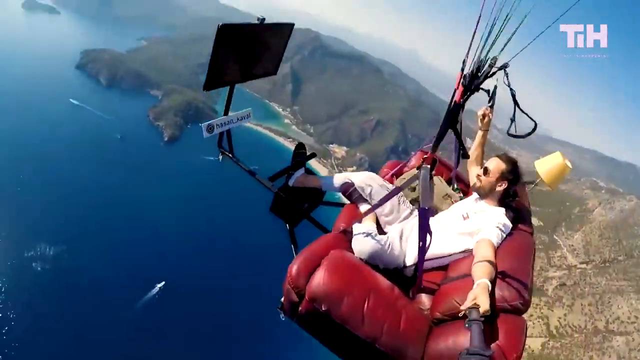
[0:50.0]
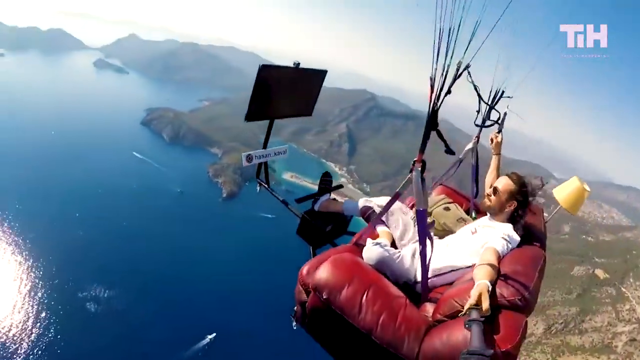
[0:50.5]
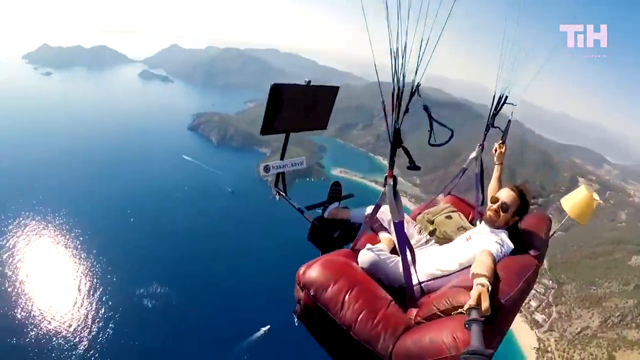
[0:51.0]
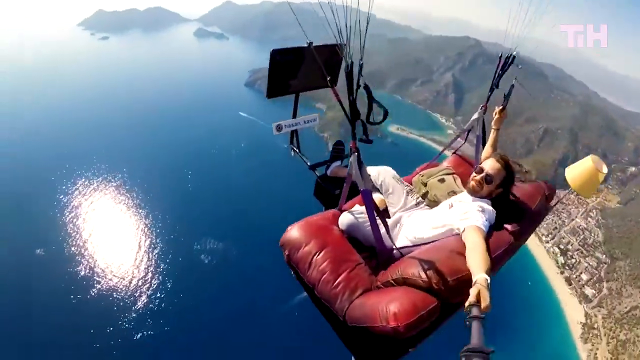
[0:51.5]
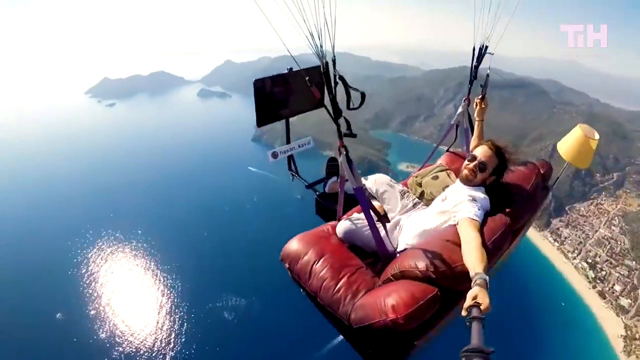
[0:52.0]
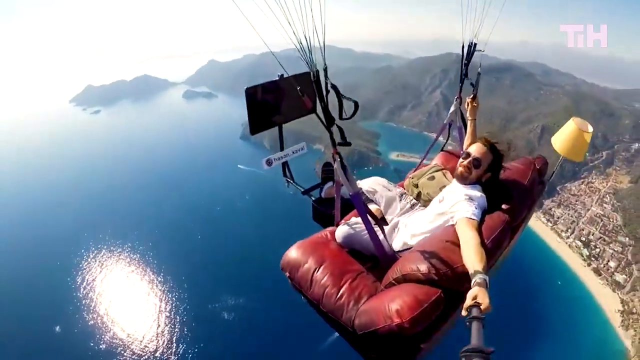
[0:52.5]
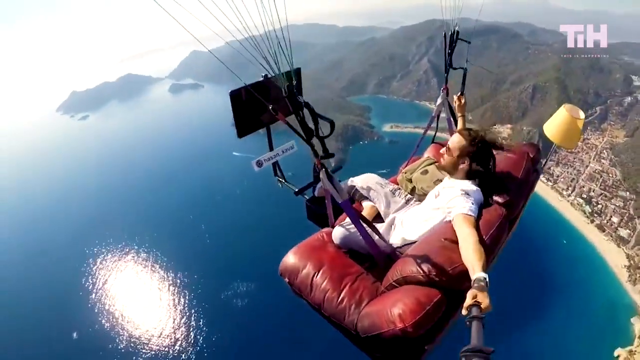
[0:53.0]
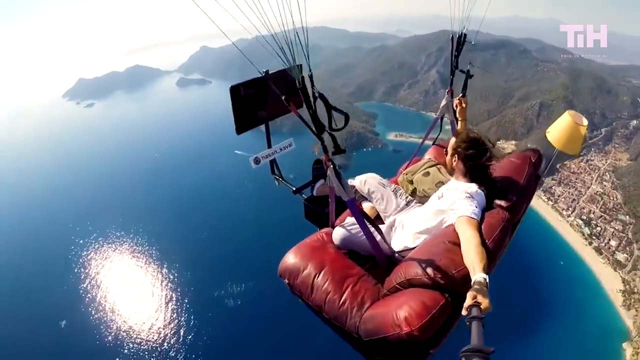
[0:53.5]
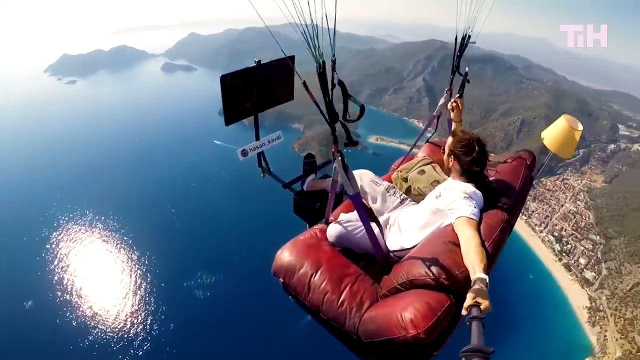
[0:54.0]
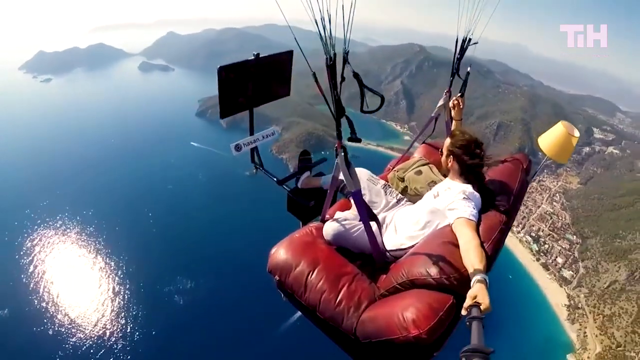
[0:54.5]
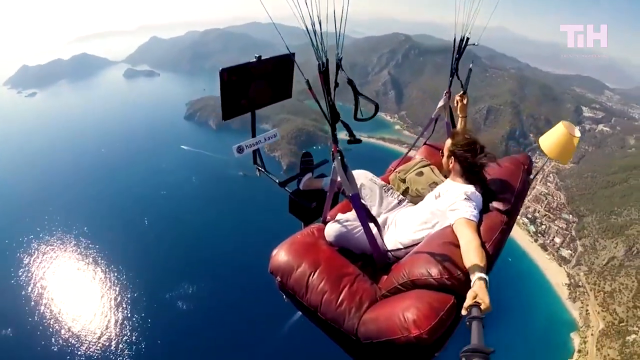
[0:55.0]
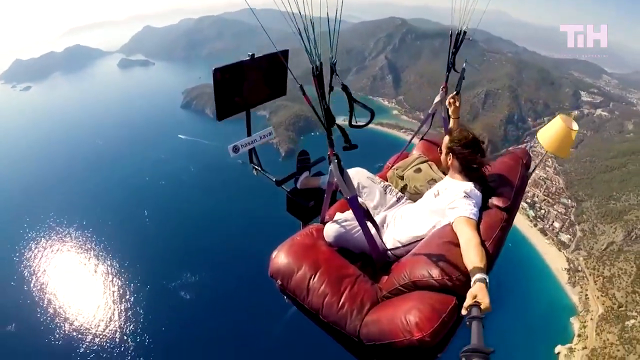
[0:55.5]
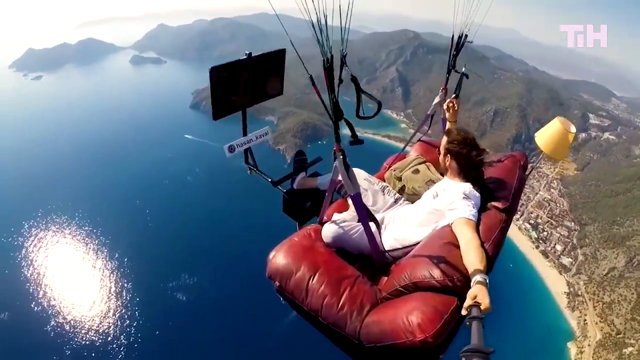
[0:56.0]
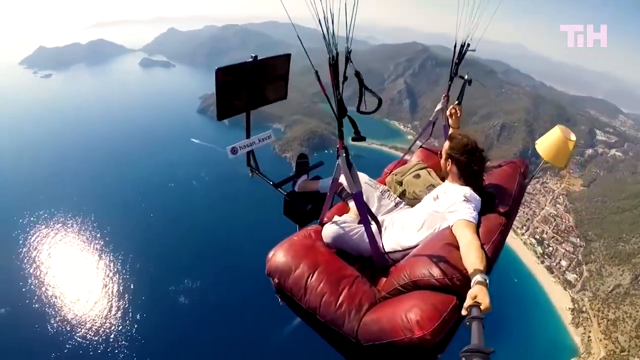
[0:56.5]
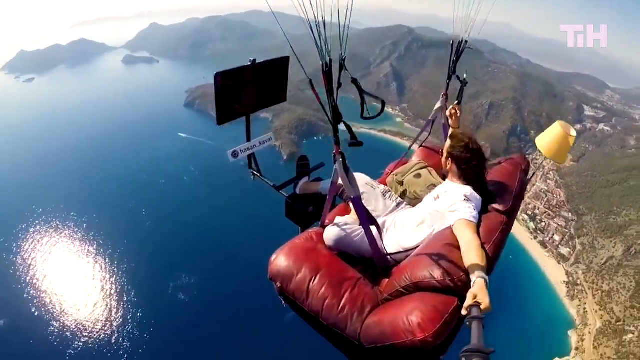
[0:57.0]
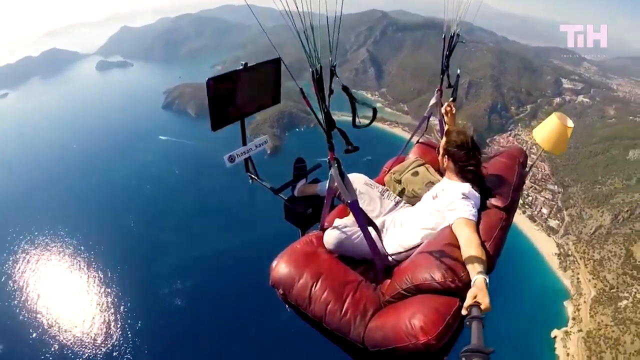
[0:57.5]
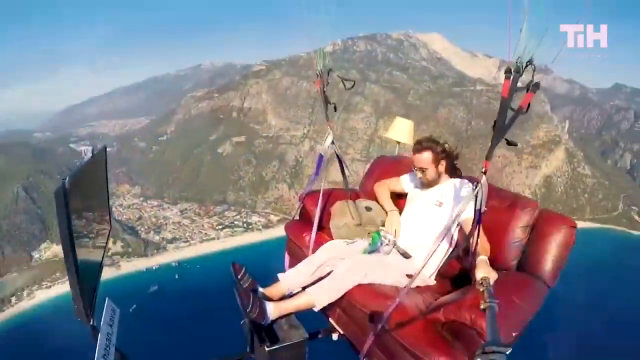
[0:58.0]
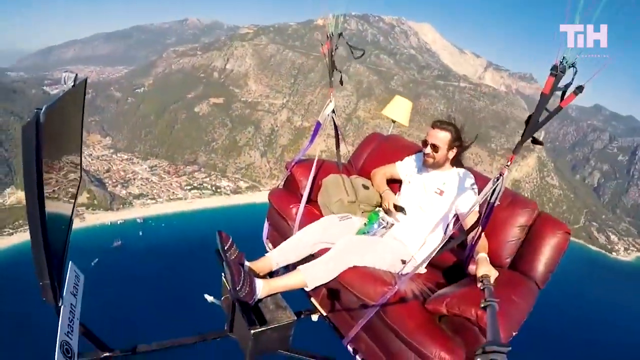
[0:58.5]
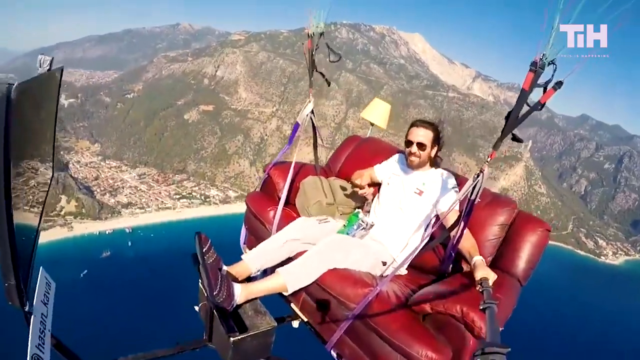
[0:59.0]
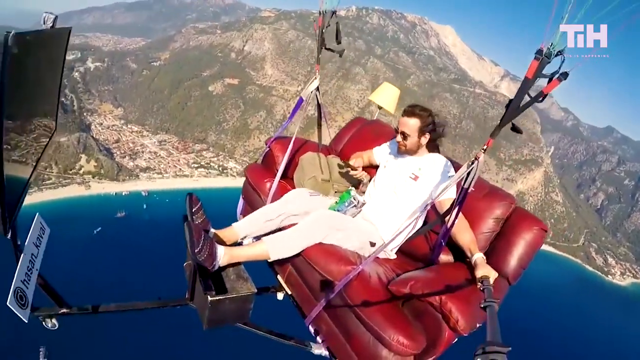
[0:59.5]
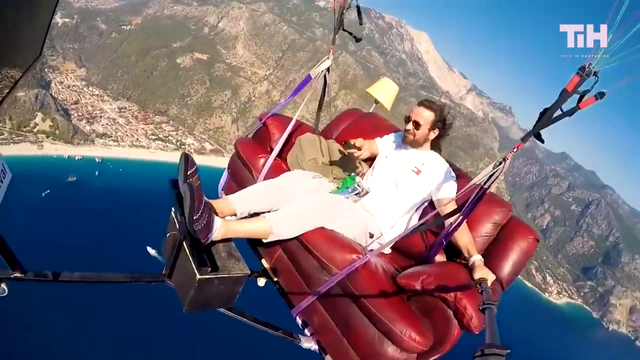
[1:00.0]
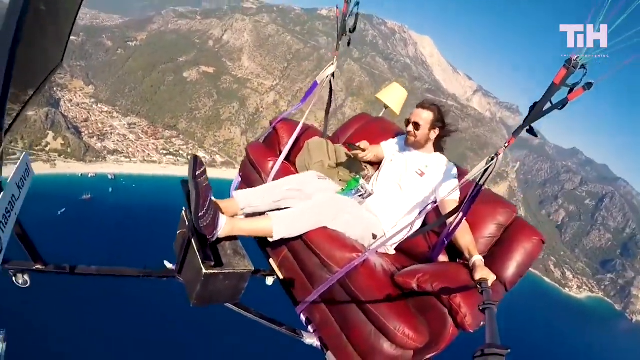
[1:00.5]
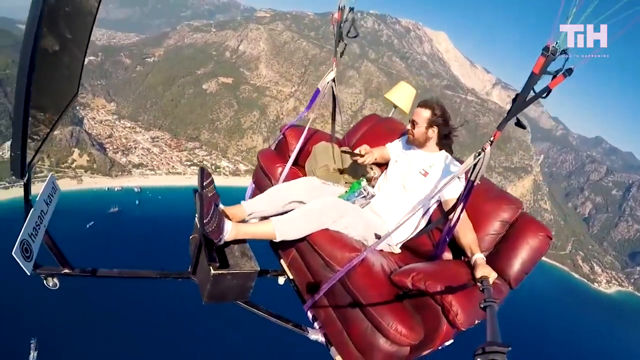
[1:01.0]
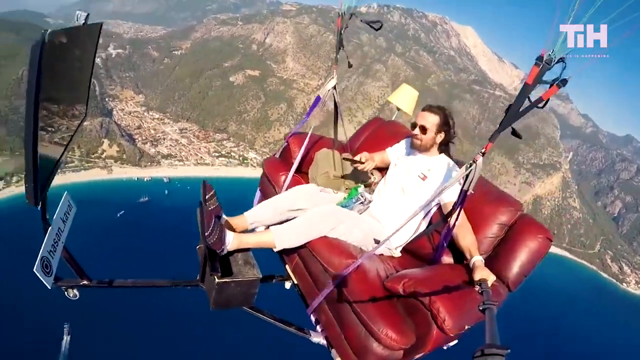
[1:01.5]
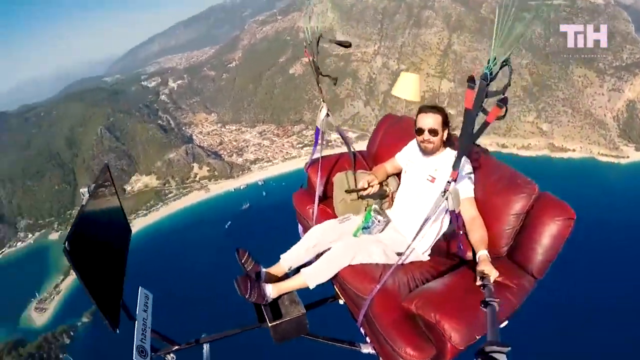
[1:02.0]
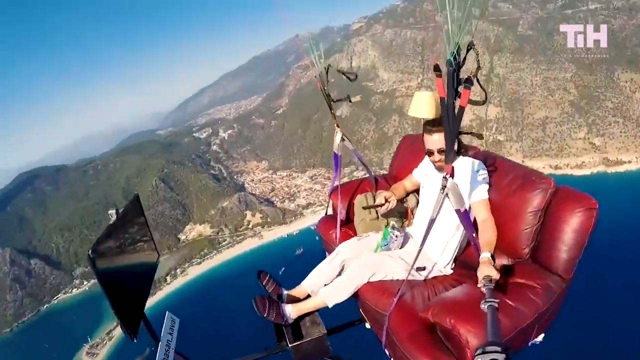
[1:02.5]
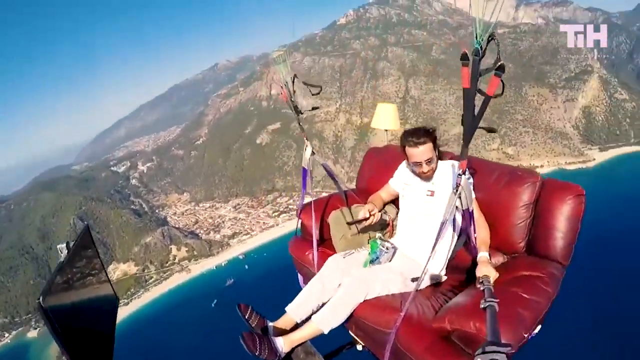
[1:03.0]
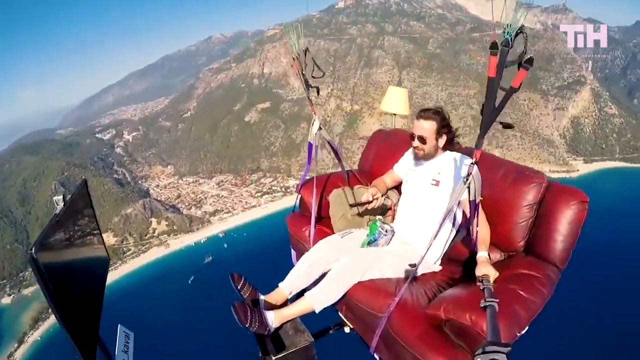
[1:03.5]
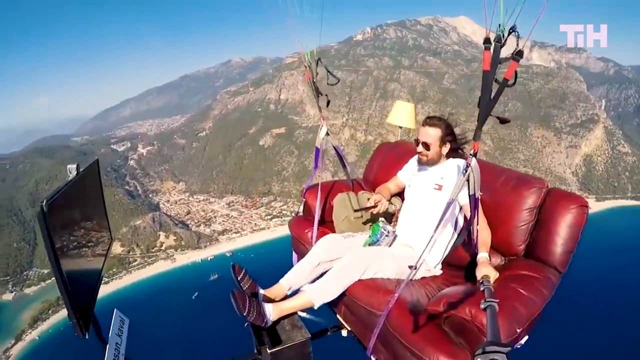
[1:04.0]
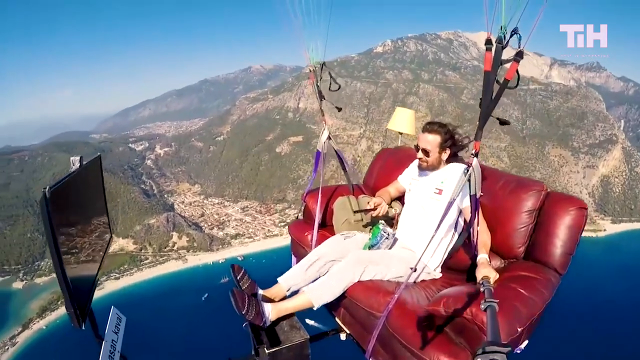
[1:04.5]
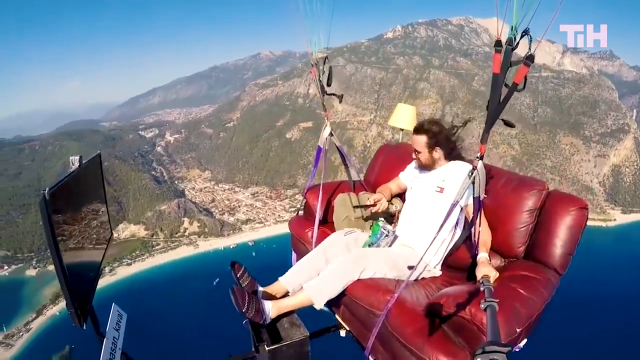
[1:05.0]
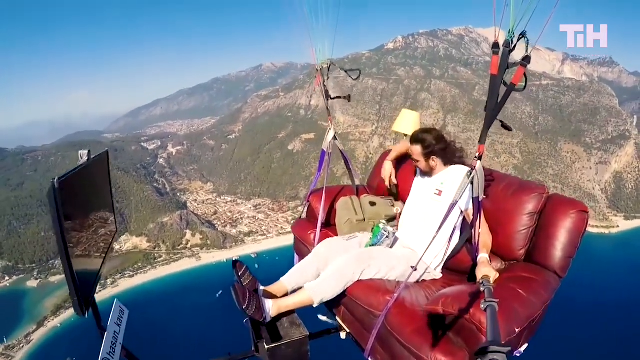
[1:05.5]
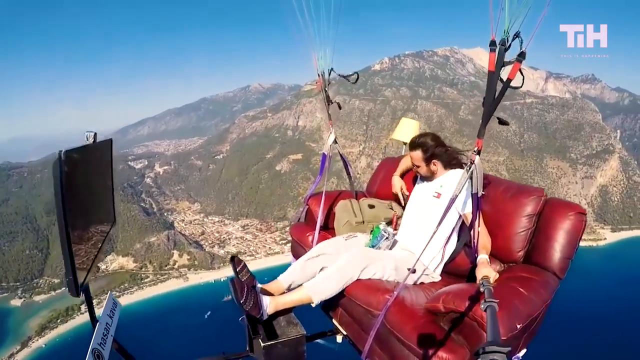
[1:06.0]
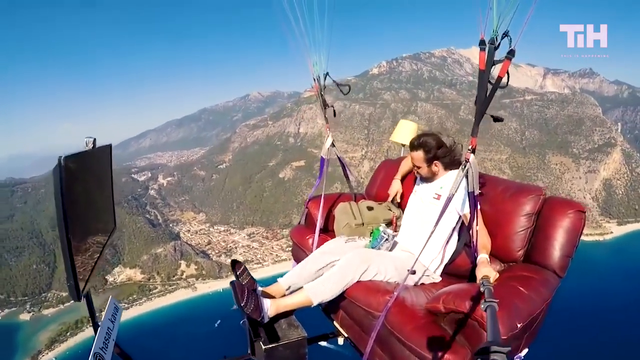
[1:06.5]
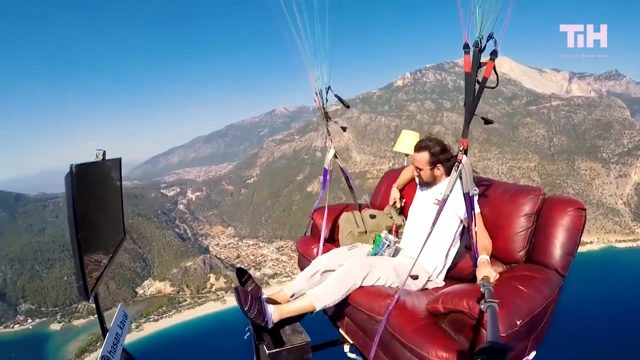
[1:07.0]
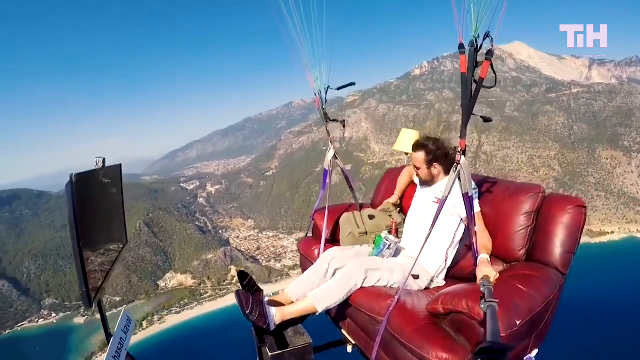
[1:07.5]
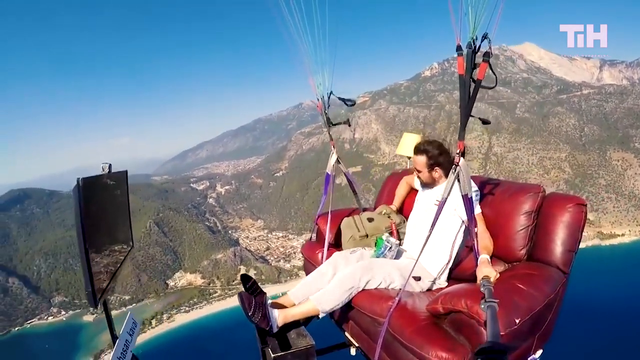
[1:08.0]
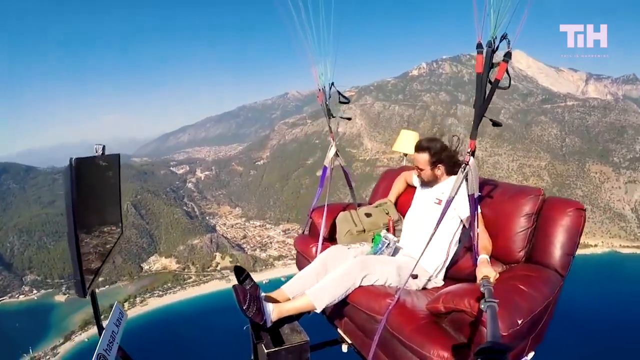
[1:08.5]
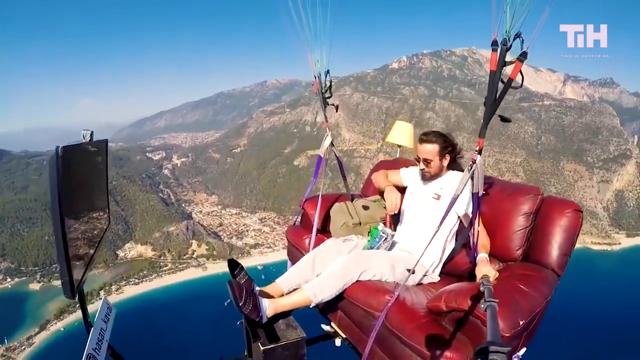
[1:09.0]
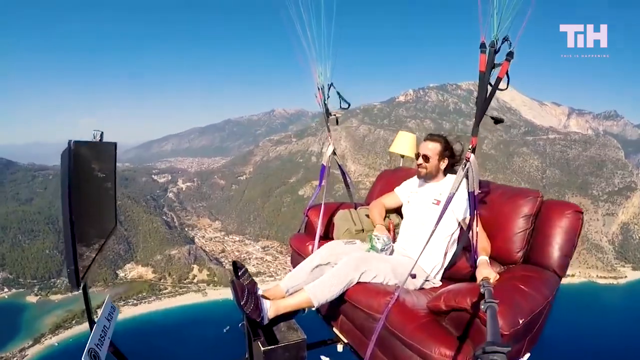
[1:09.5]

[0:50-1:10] The couch flyer seems relaxed as he watches television while flying over the lake or ocean. He holds the remote and eats a snack, wearing slippers with white ankle socks, and rests back on the couch. A sign underneath the television says "Hassan Kaval", spelled H-A-S-S-A-N-K-A-V-A-L. He holds a pole attached to a filming device, such as a camera, which films him as he flies over the lake. A logo, "T.I.H.", appears in the upper right corner of the screen, with "This is happening" written underneath. He seems very relaxed as he drifts over the water and the nearby countryside, where homes, businesses and the coastline are visible.